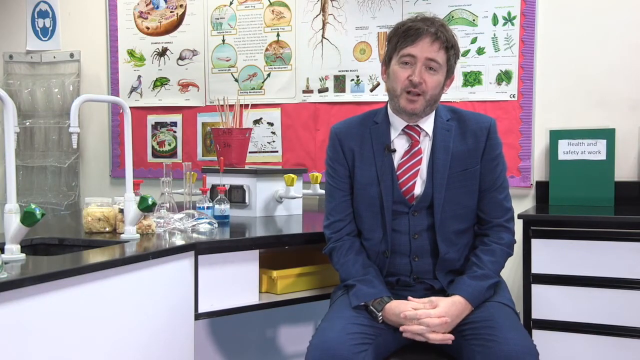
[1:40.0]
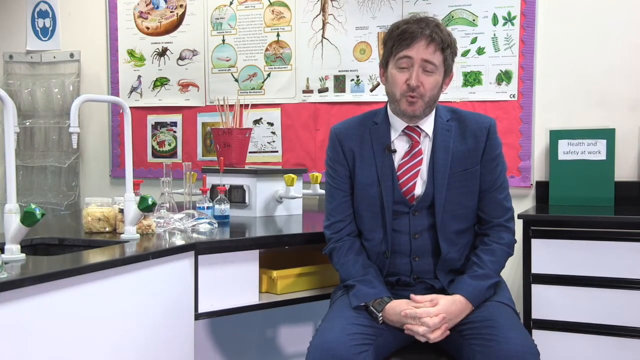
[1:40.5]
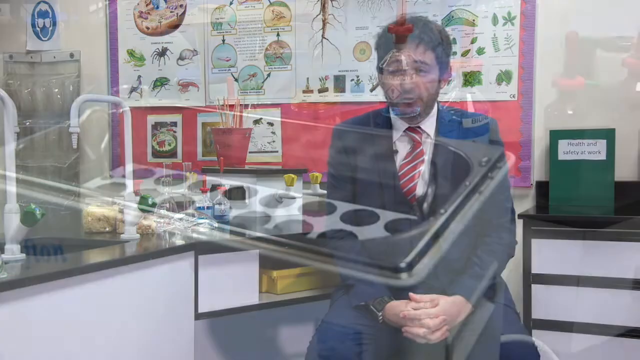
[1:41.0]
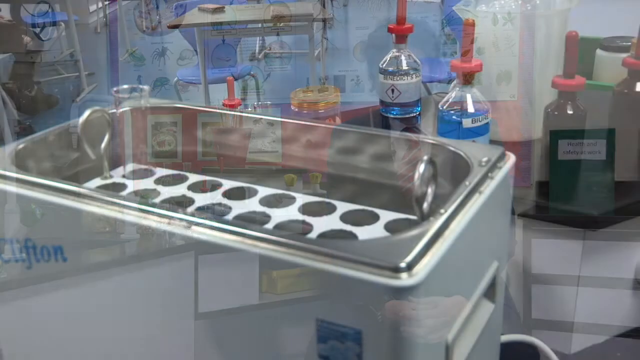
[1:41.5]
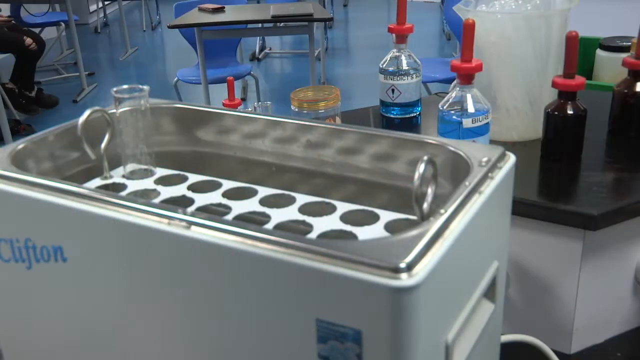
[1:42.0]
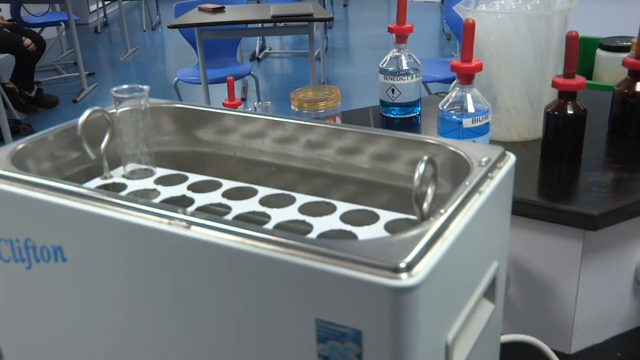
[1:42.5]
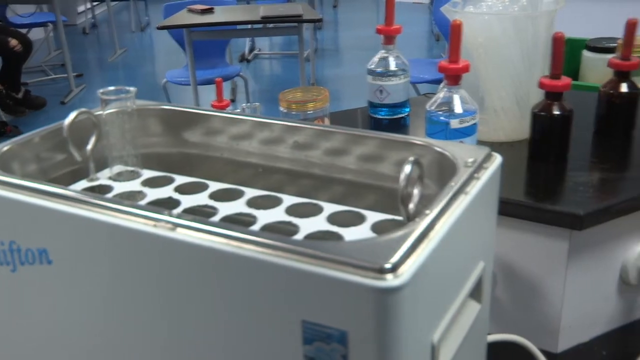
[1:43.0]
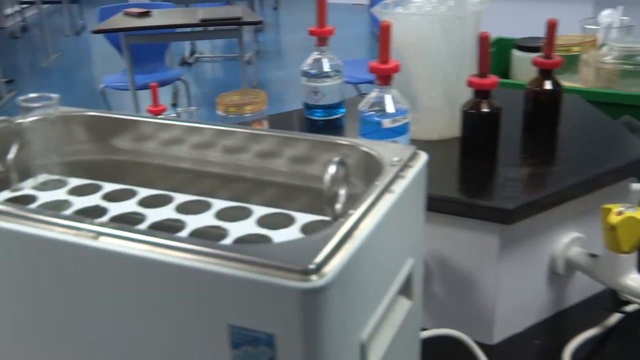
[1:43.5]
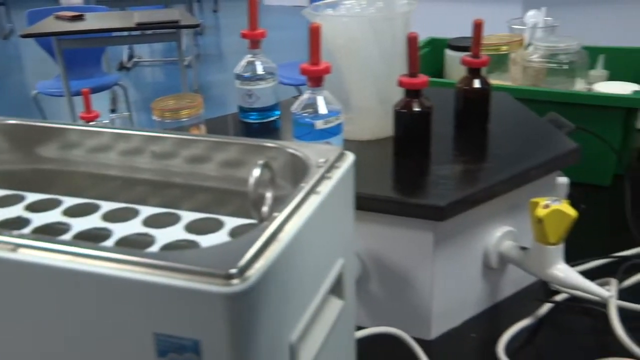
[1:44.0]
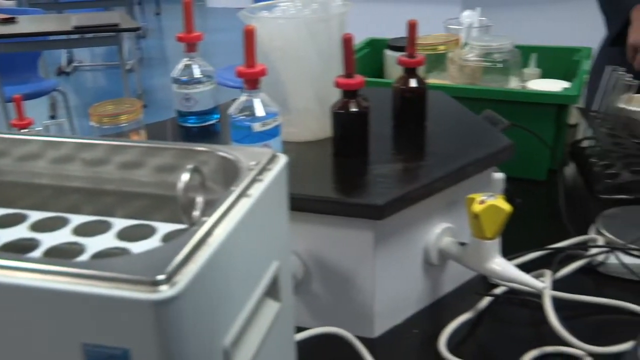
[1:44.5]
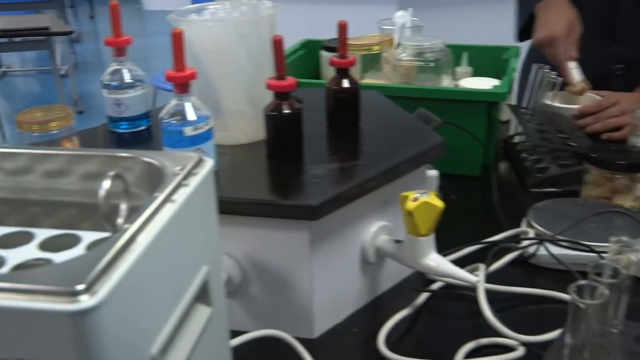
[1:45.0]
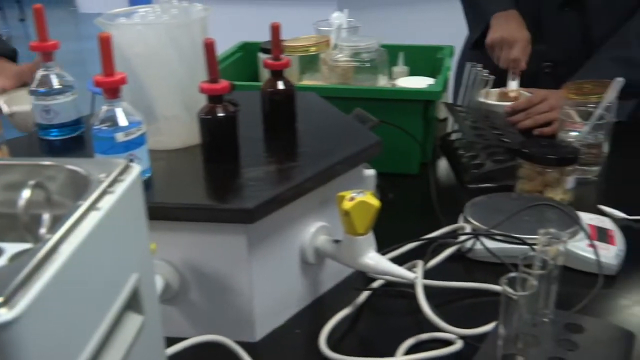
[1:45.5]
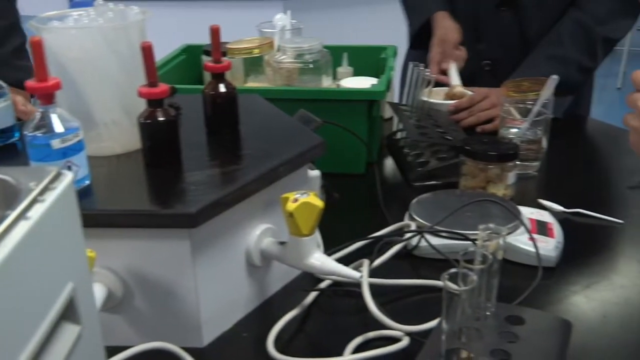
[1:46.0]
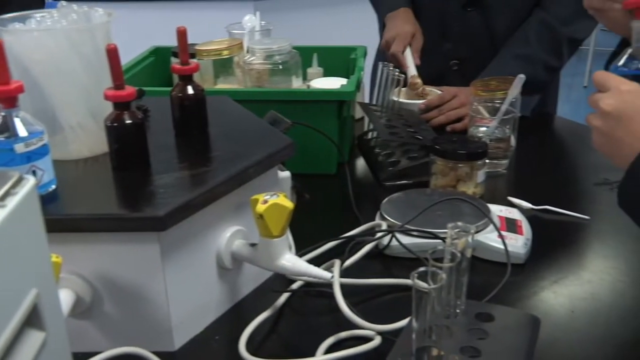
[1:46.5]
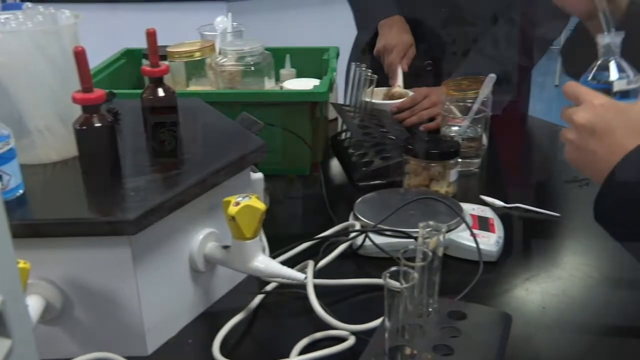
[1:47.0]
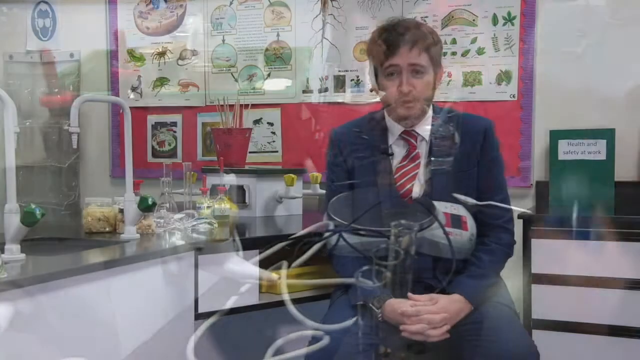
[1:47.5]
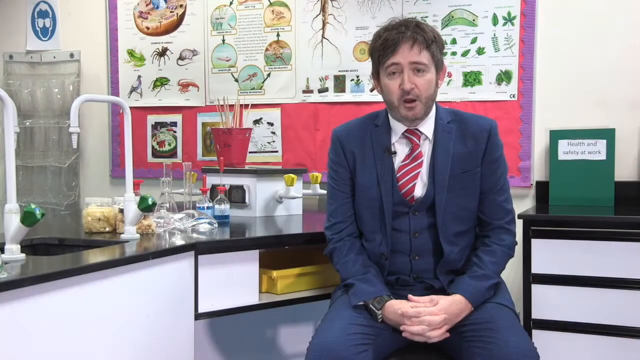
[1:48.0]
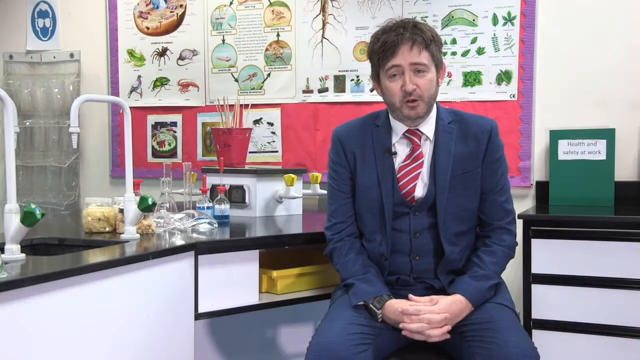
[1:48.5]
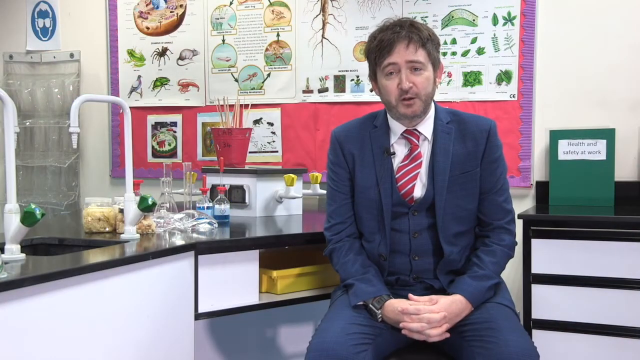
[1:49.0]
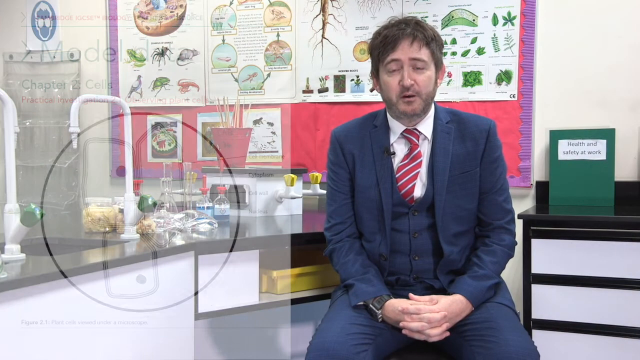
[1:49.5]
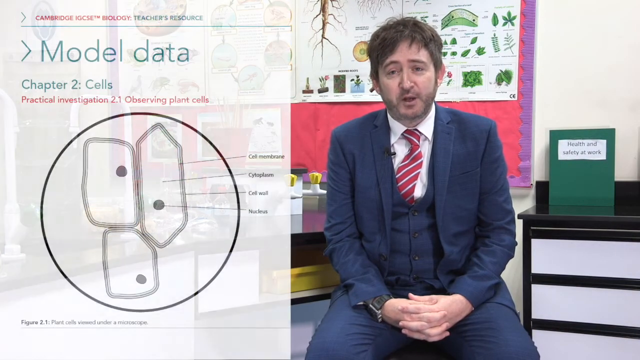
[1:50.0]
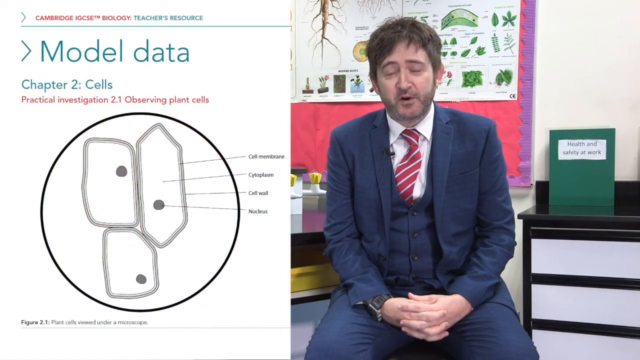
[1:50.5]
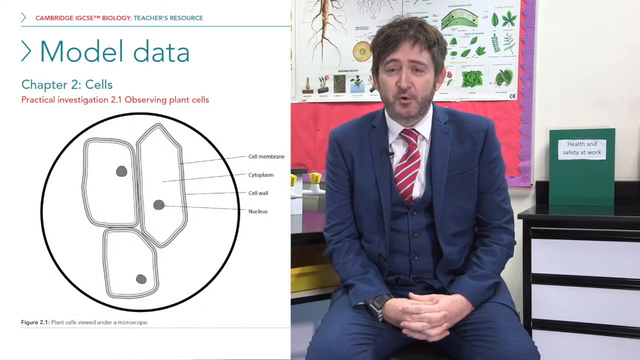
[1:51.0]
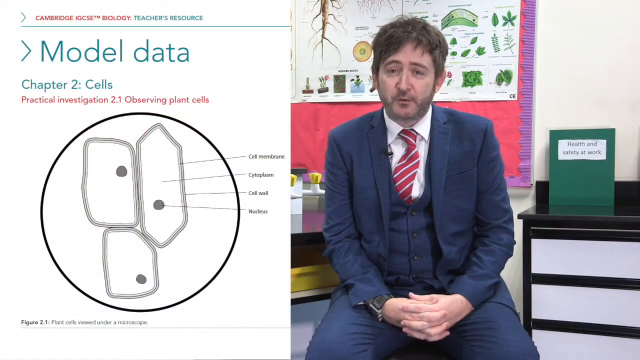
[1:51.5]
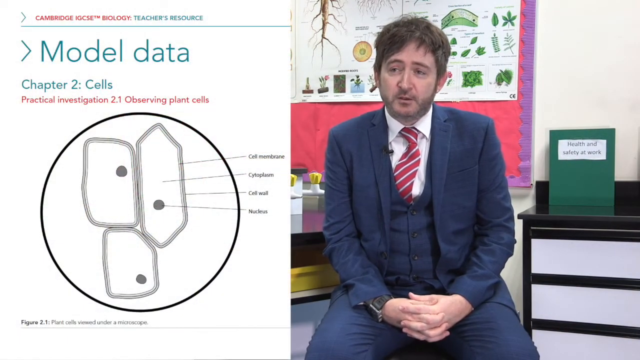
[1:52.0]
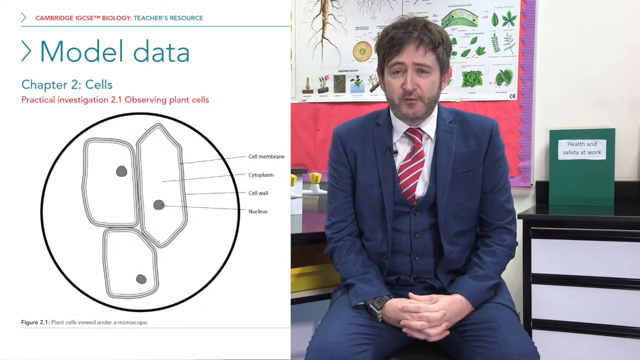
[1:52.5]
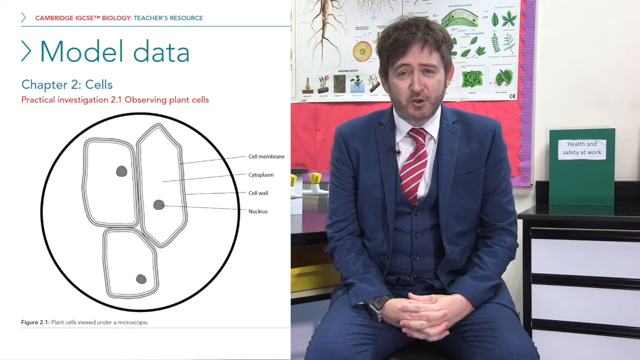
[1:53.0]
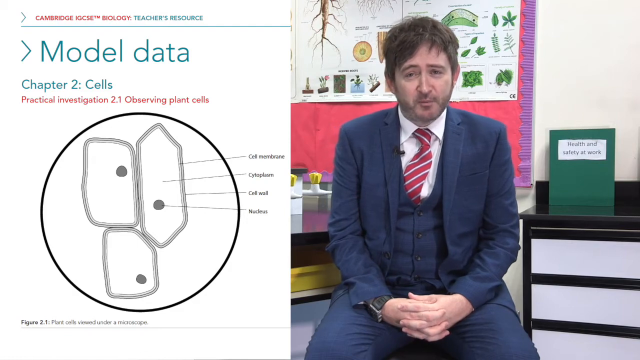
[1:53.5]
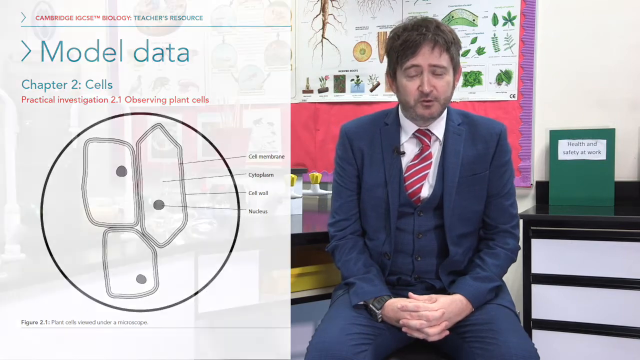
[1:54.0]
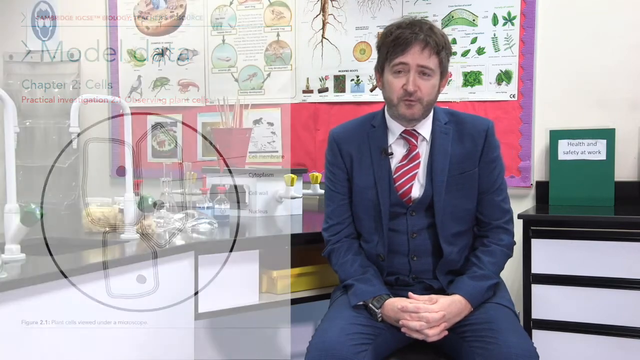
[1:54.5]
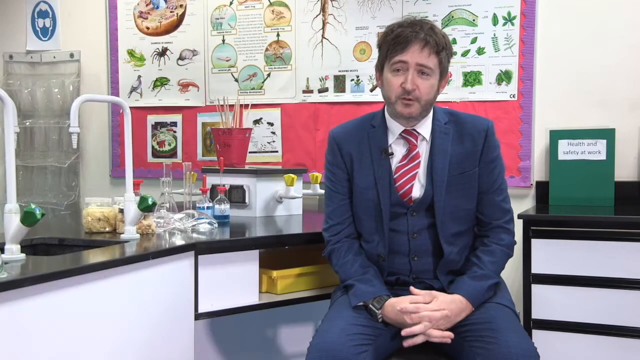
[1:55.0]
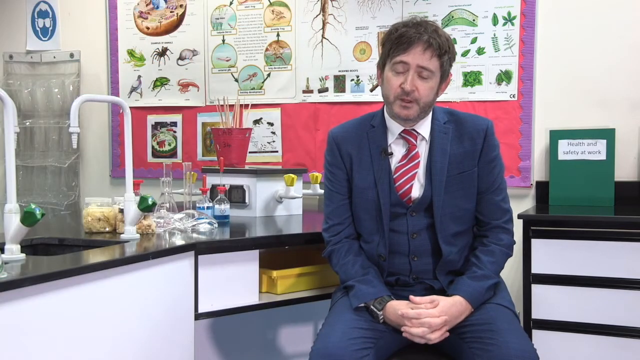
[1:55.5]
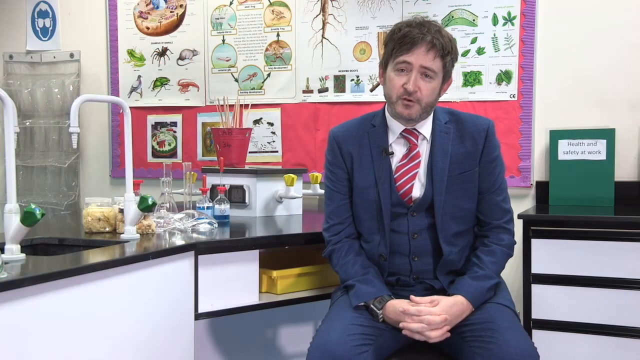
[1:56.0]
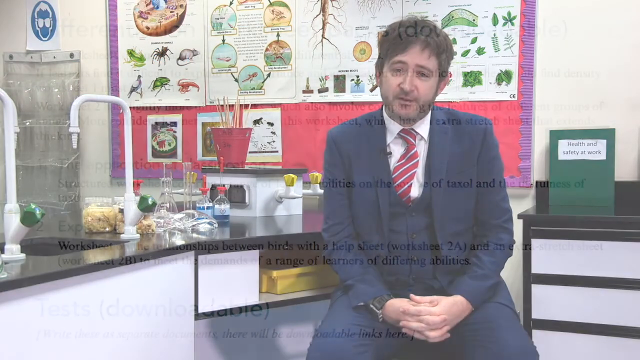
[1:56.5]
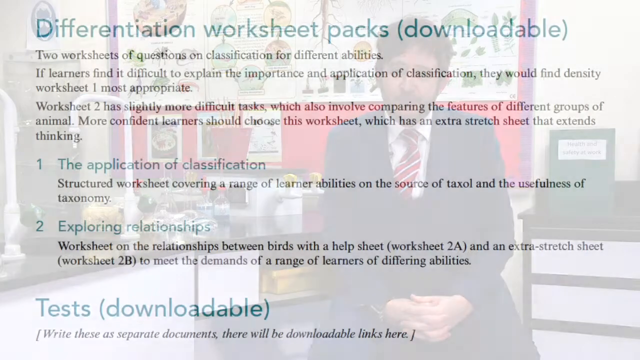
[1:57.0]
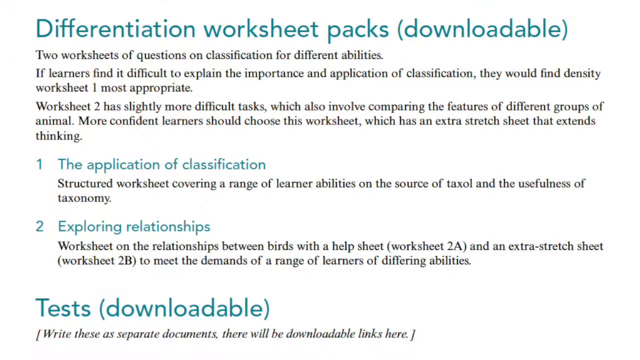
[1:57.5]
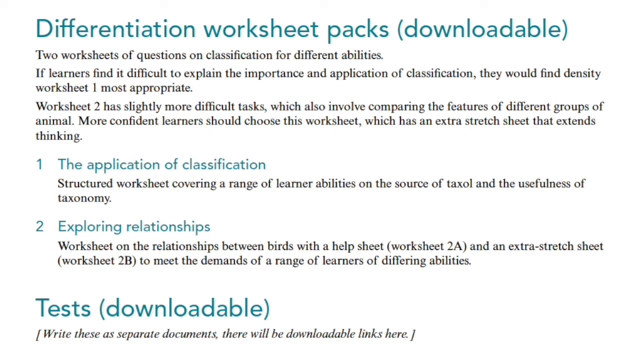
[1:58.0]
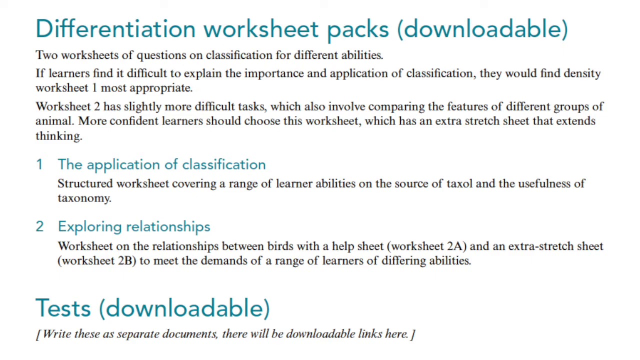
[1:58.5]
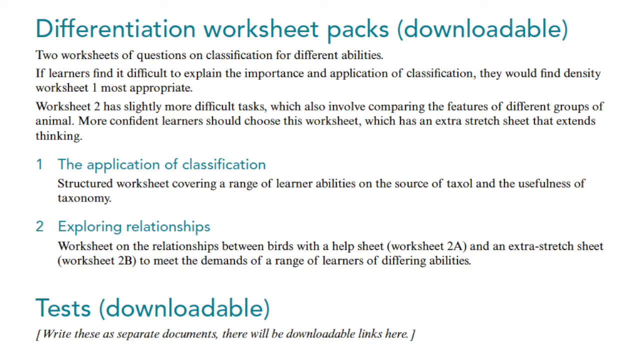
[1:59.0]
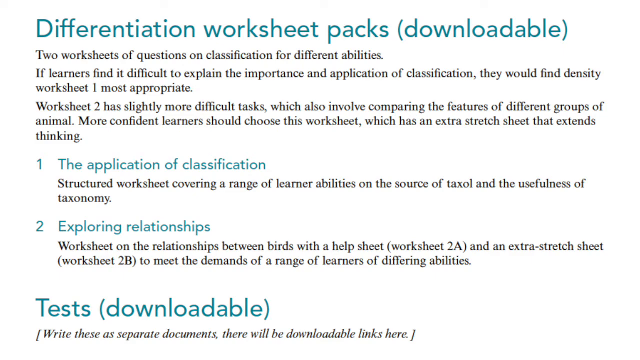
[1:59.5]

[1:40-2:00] A teacher in a three-piece suit sits in what looks to be a science classroom, talking to the audience. The video switches to what appears to be a science experiment: six glass bottles, five of them with red pipettes on them, all on what appears to be an electrical box of some kind with a tap that has a yellow valve. There is also a test tube box in front of this. Some children use a pestle and mortar to mix up a substance that looks to be yellow. The video switches back to the teacher or professor, sat down in the science room talking to the audience, and to his left the words "model data, chapter 2 cells, practical investigation, observing plant cells" come up on the screen.